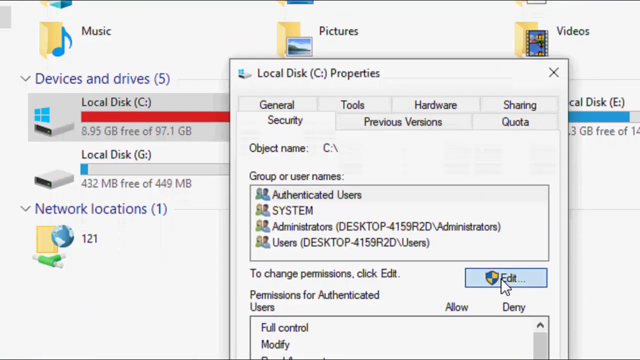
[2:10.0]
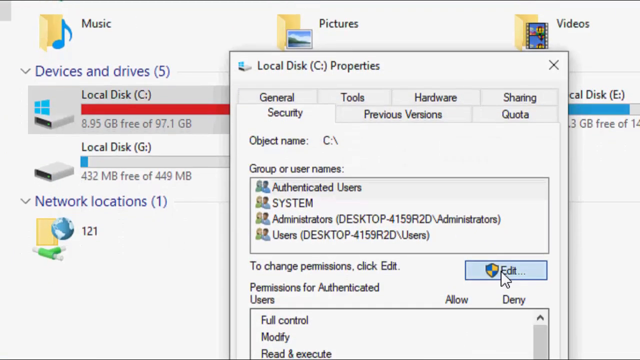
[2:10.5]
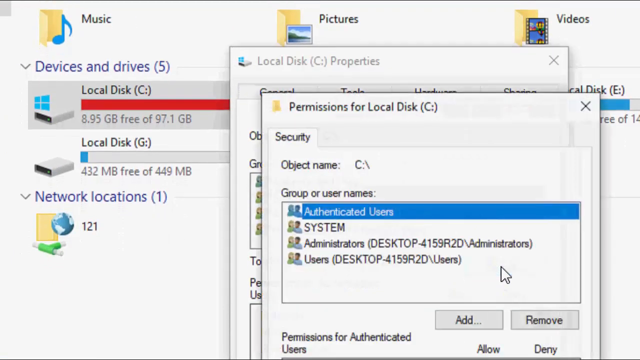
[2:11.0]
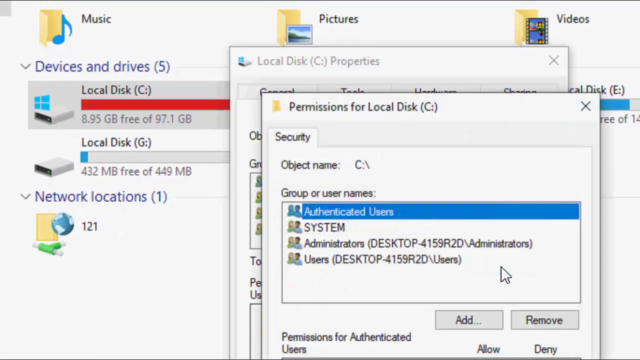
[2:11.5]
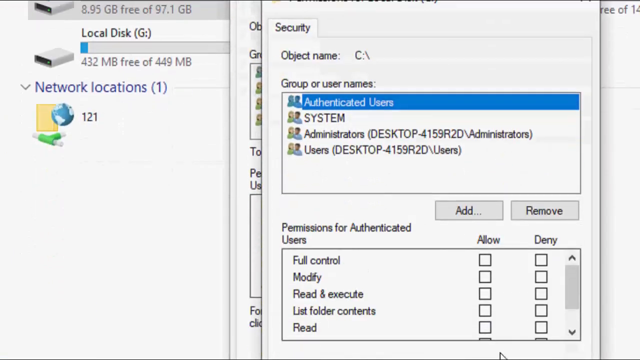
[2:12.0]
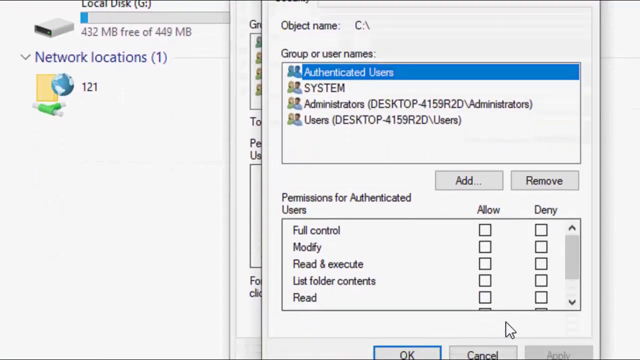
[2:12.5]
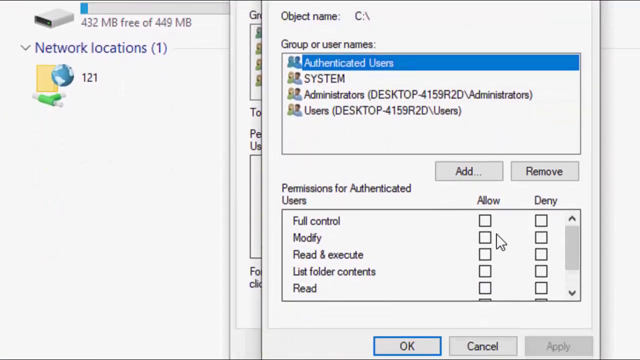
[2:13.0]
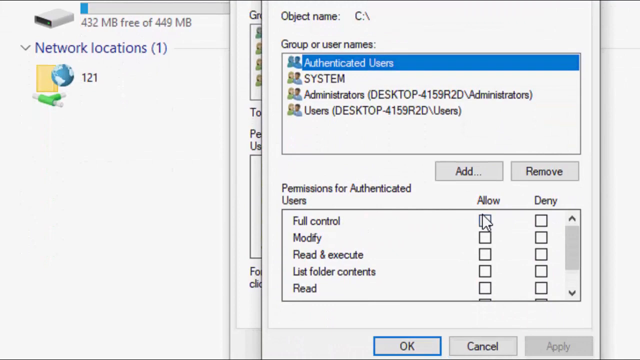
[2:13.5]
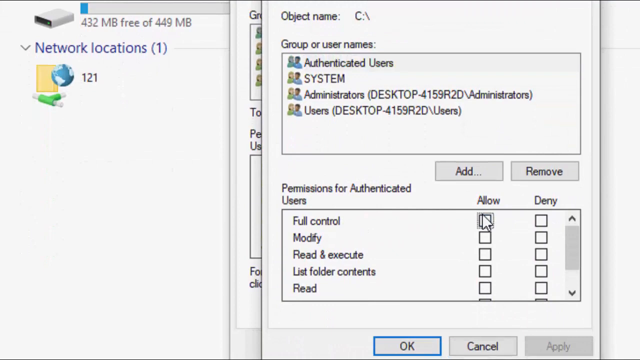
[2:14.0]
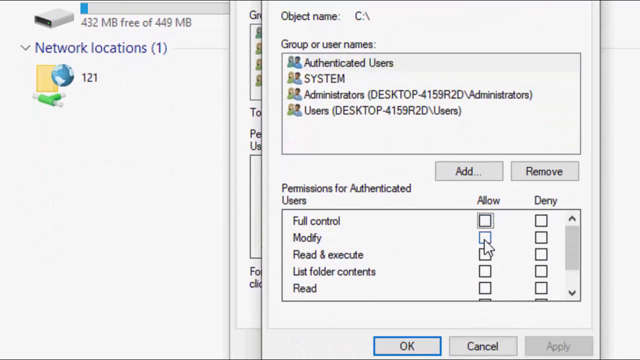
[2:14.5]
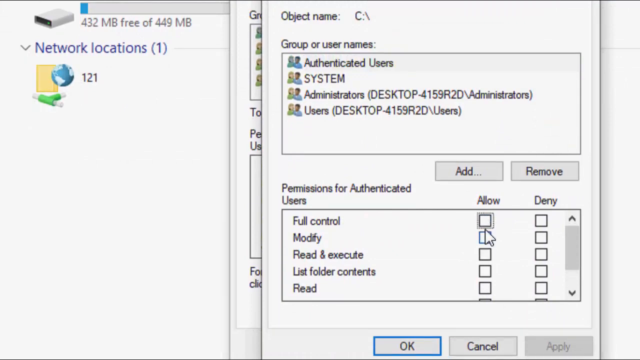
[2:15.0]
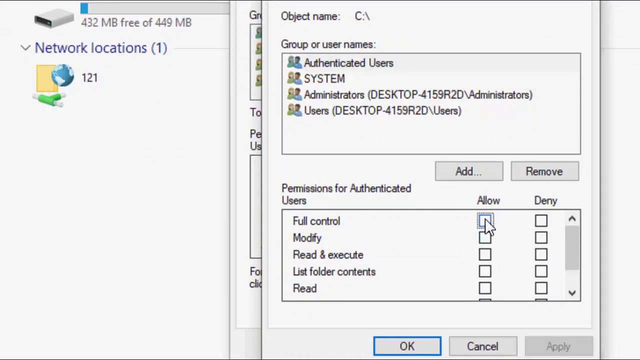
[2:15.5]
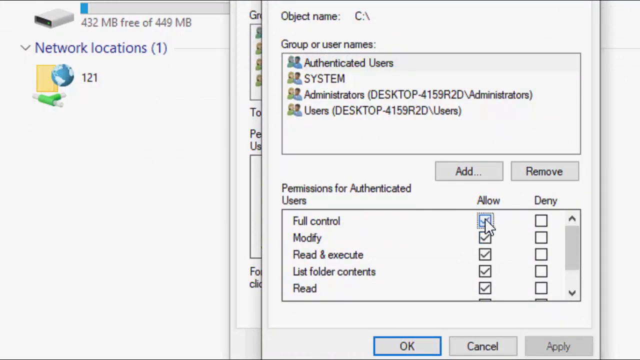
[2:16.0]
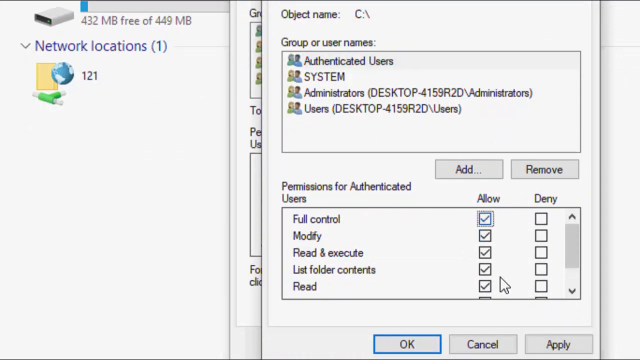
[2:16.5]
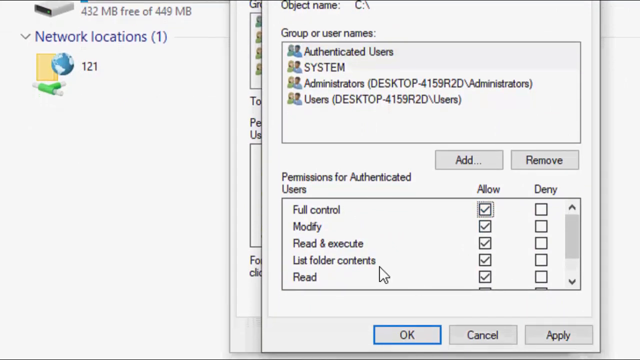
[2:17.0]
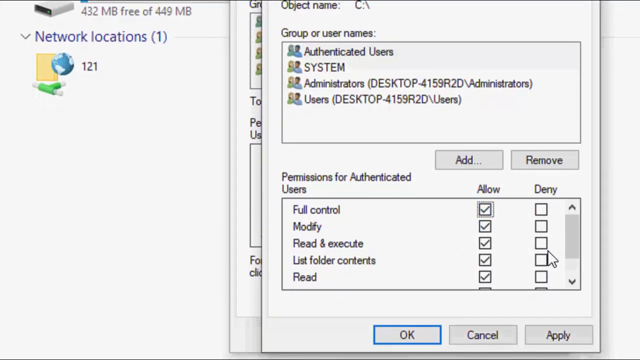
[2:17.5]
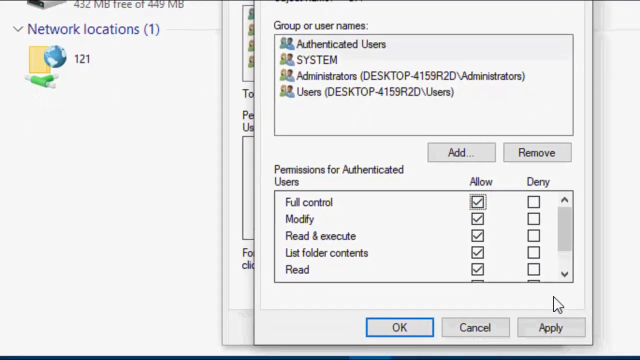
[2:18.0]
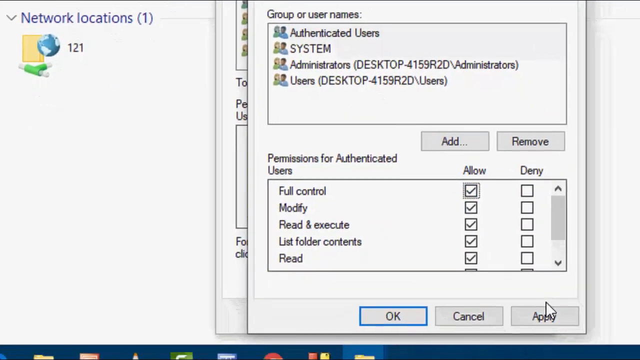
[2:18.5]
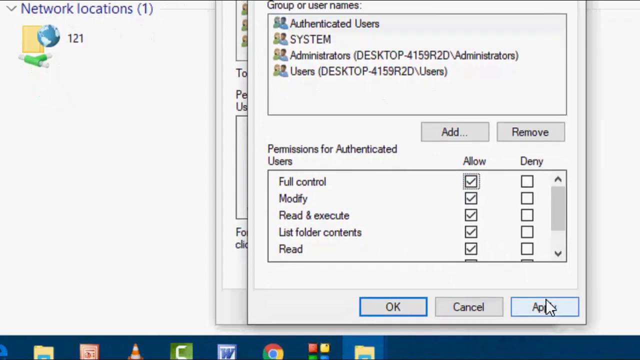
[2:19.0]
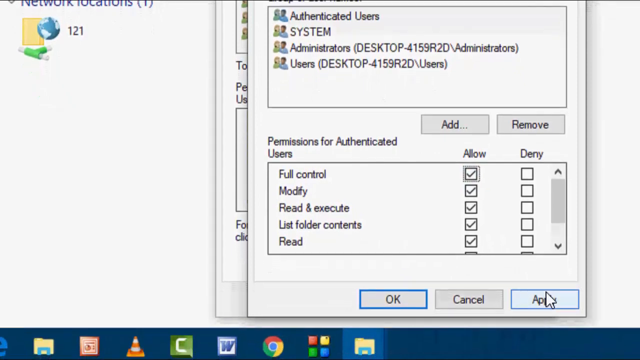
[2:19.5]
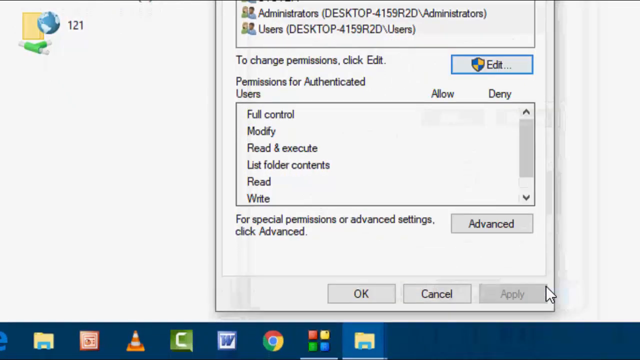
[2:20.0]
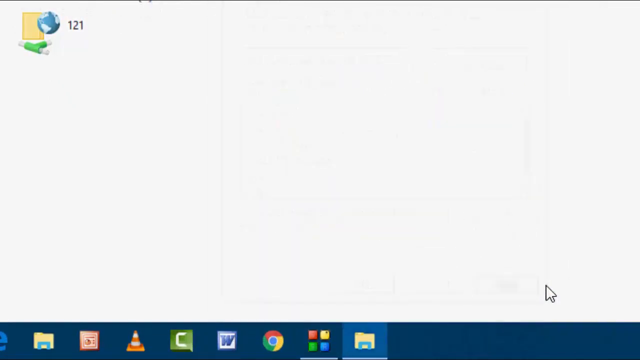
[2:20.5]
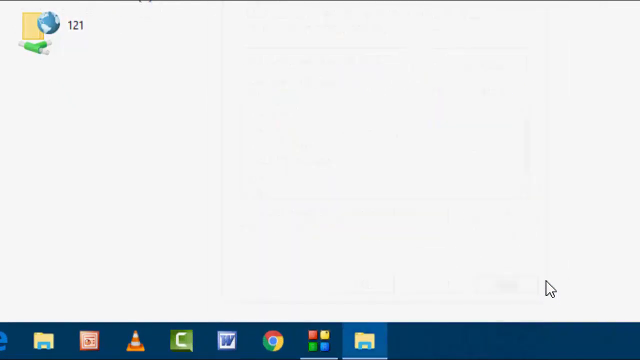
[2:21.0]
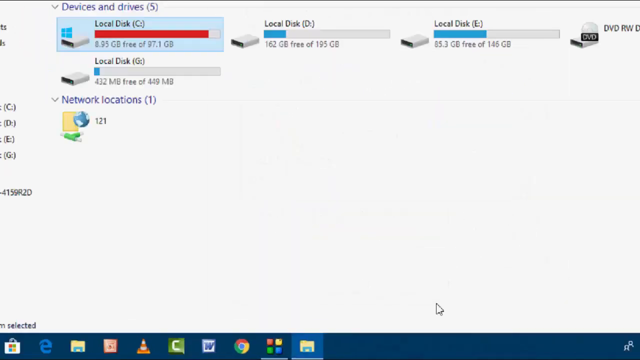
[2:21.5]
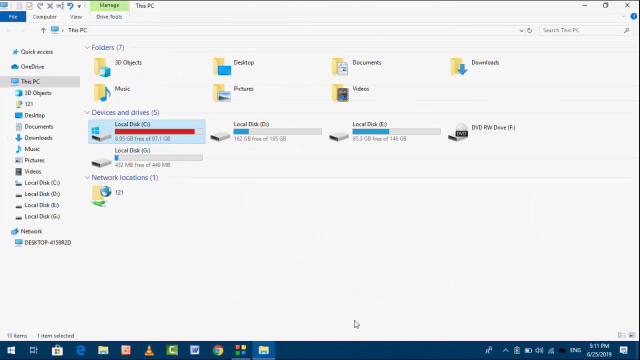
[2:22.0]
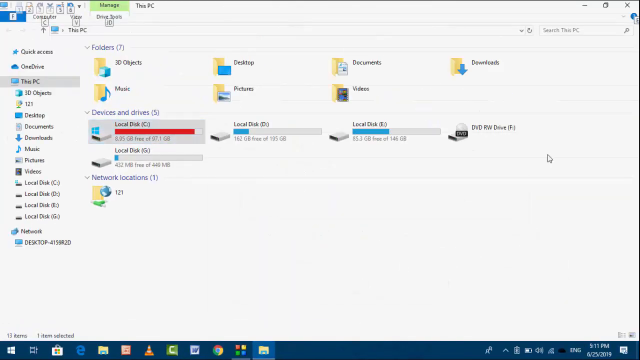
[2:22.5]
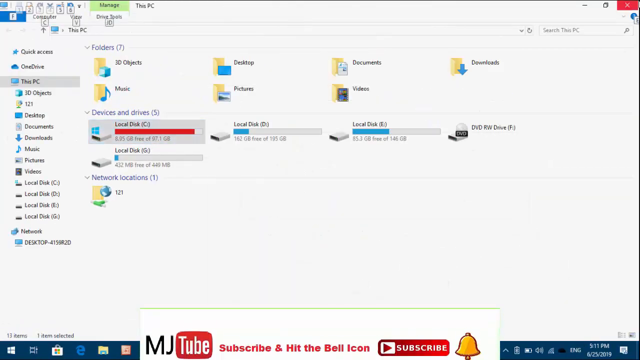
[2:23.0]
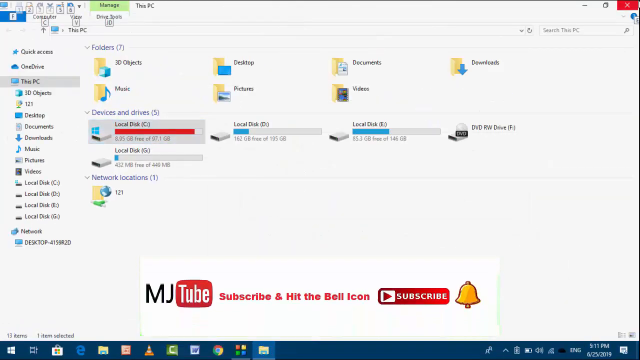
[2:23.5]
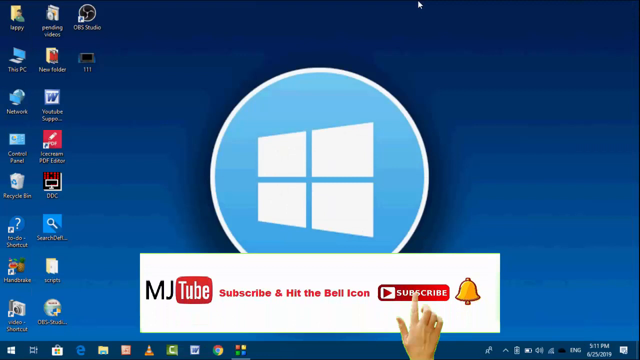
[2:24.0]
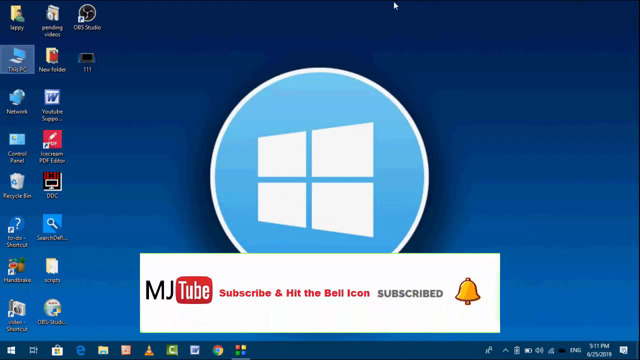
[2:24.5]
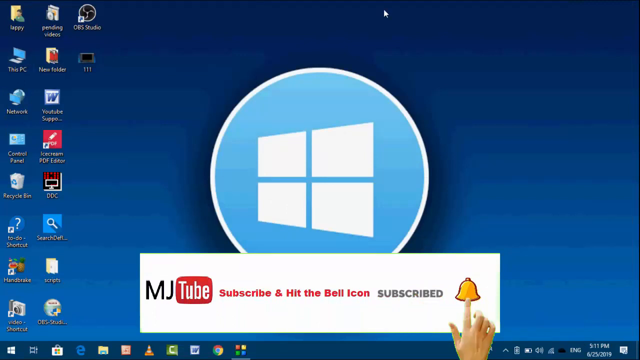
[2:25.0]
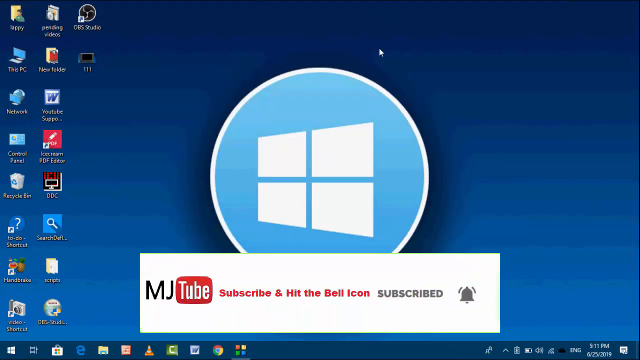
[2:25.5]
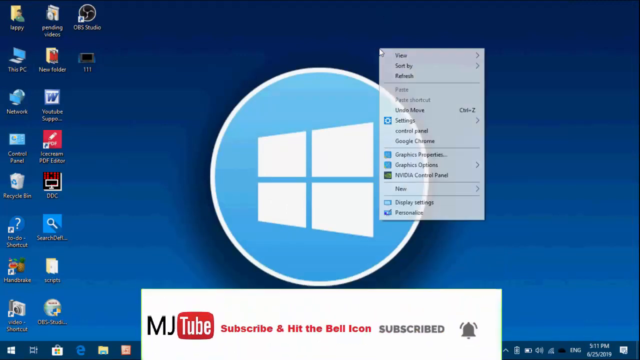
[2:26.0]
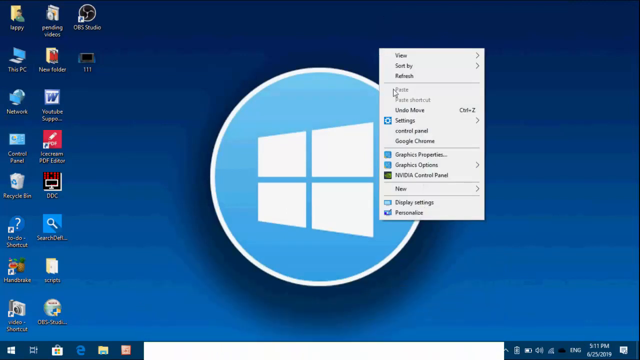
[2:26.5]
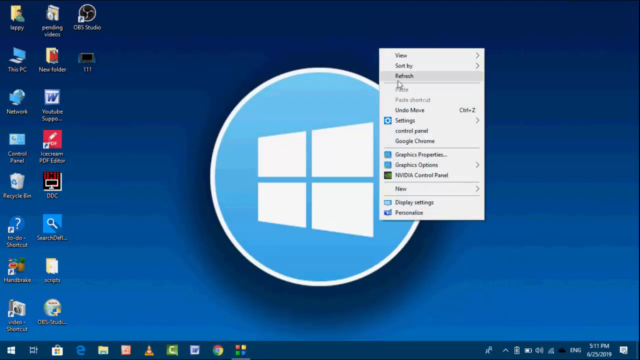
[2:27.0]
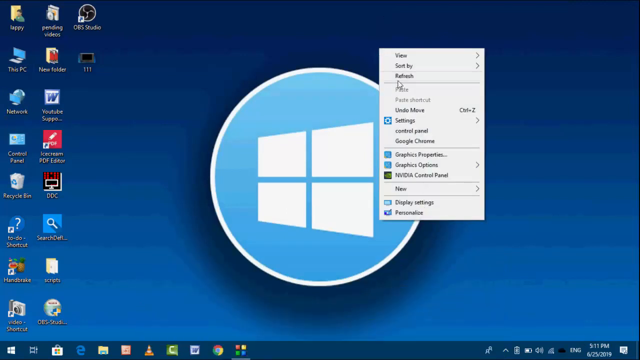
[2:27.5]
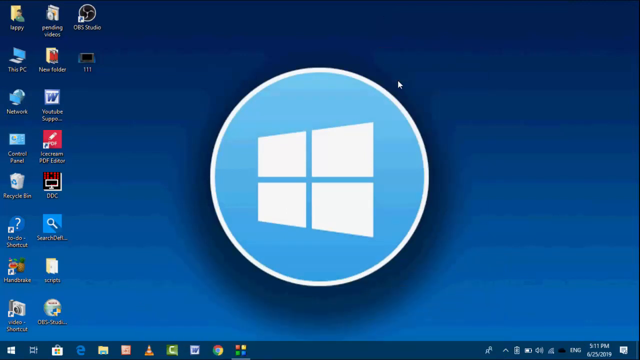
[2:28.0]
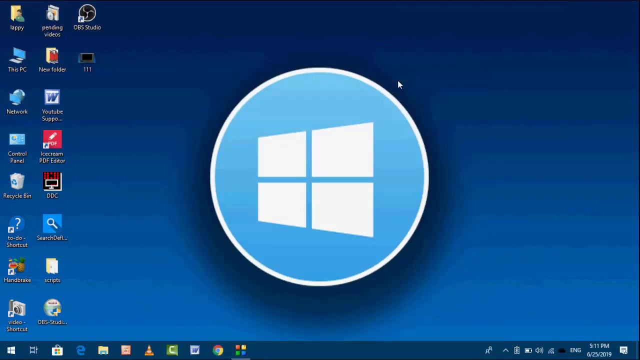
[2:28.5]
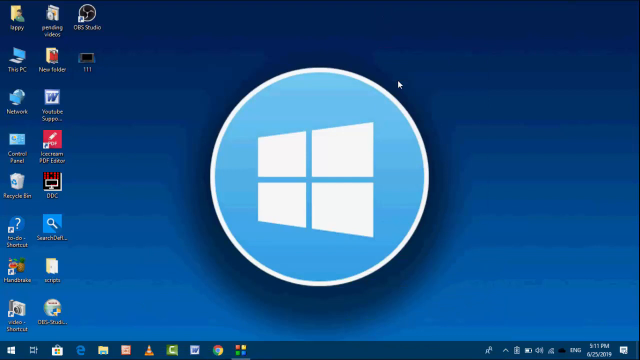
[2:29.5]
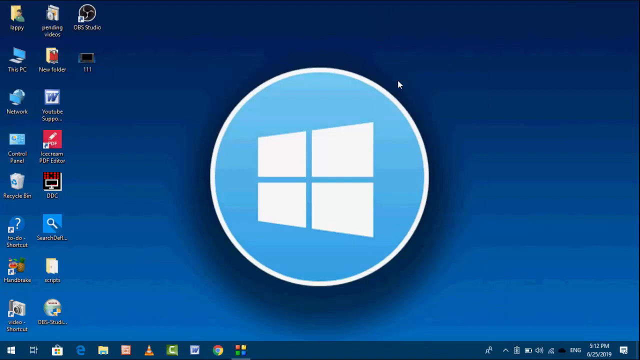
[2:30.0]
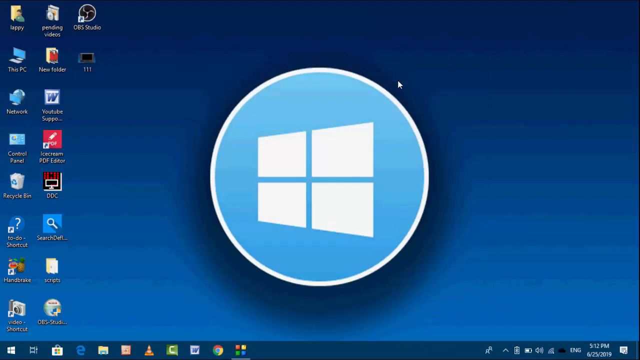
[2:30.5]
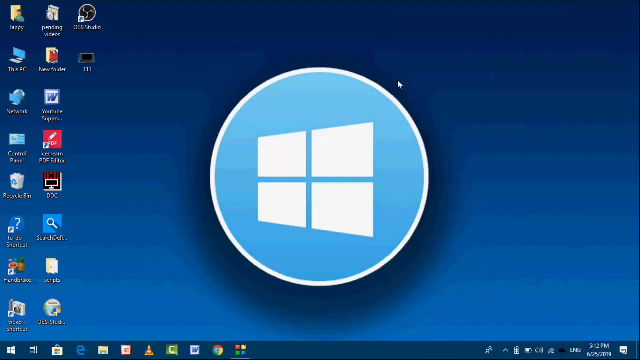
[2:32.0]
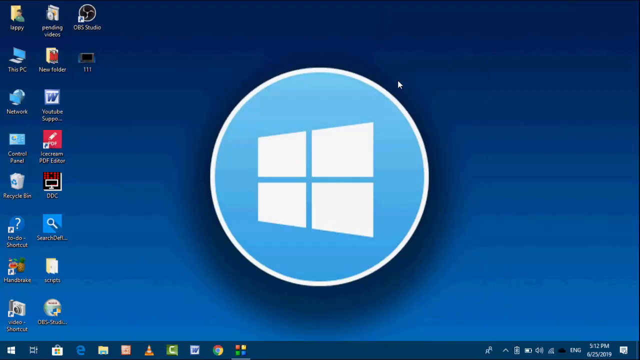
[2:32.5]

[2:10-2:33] The person is in This PC under devices and drives and has opened the local disk properties. There are many tabs, such as General, Tools, Hardware, Sharing, Security, Previous Versions and Quota, with the object name C drive. They are on the group or user names section, where it says "To change permissions, click Edit". They click Edit, and another window opens, "Permissions for Local Disk", under Security. Authenticated Users is selected, and below are the permissions for Authenticated Users, including "Full control" with "Allow". They select the Allow checkbox, which checks all the ones below it: Modify, Read and execute, List folder contents and Read. They click the Apply button below. After the window closes, the camera zooms out to show the full view of the computer. They close the This PC window, right-click, and press Refresh.